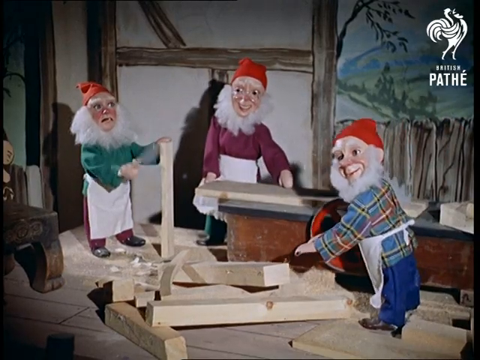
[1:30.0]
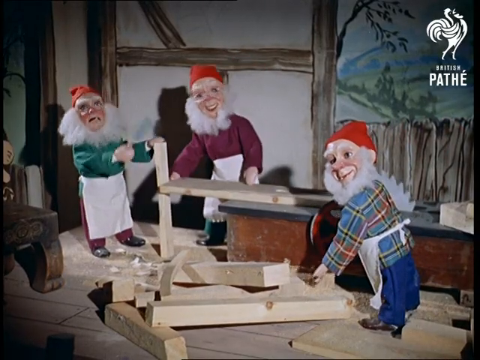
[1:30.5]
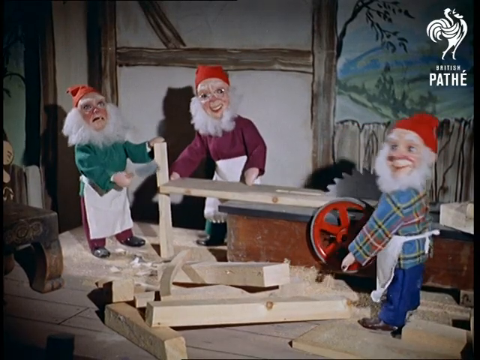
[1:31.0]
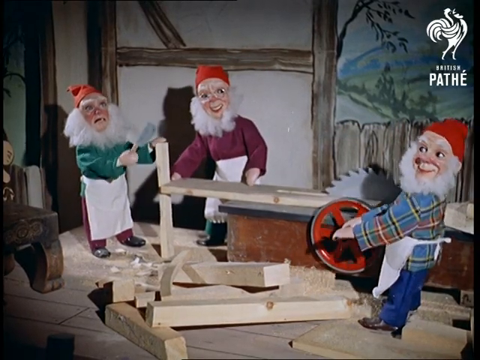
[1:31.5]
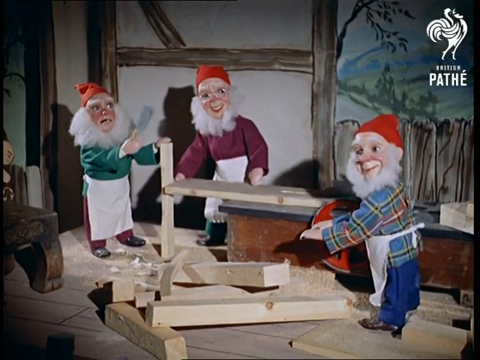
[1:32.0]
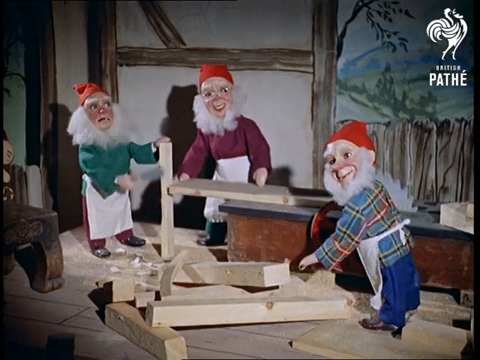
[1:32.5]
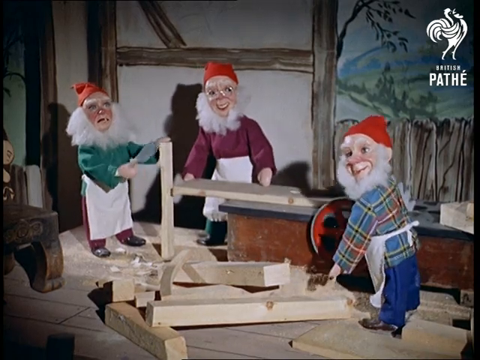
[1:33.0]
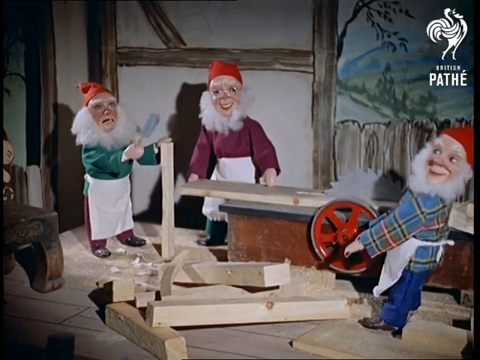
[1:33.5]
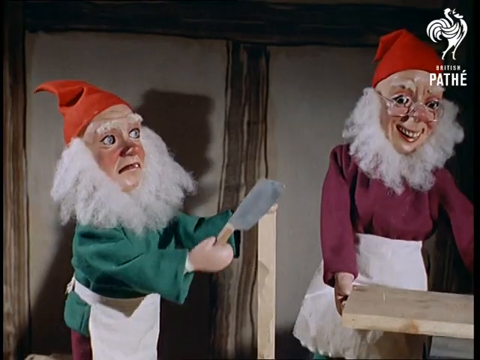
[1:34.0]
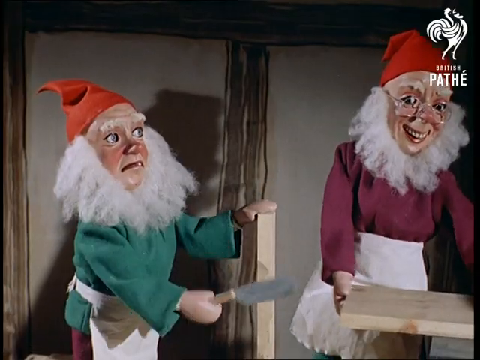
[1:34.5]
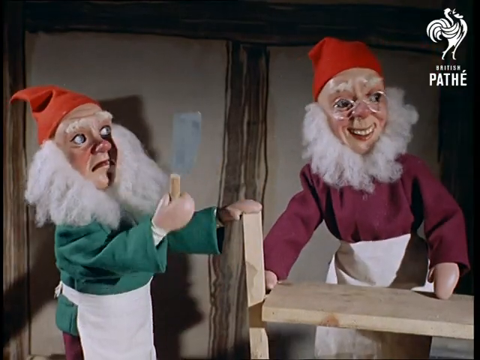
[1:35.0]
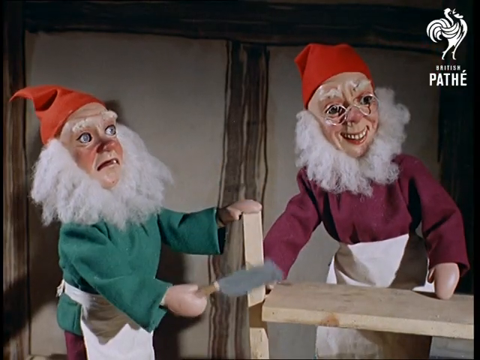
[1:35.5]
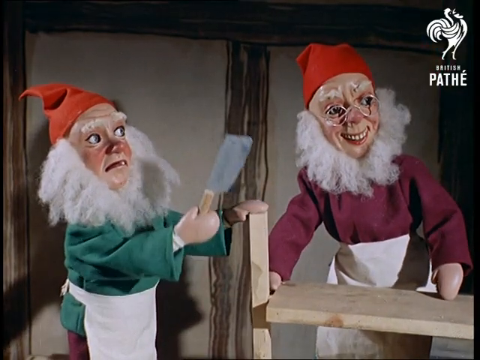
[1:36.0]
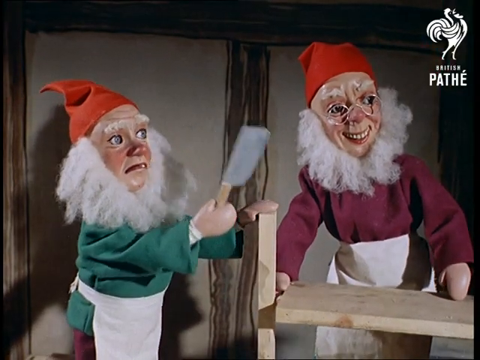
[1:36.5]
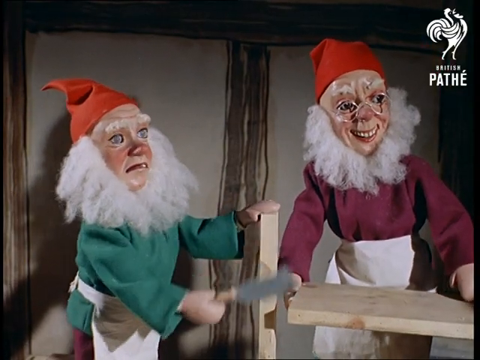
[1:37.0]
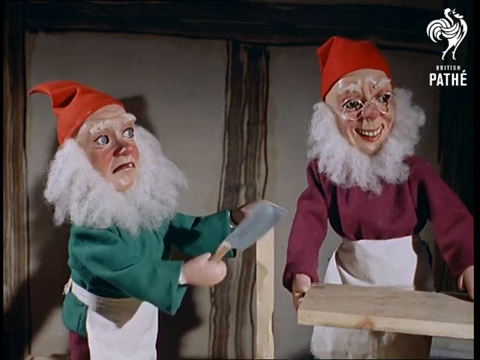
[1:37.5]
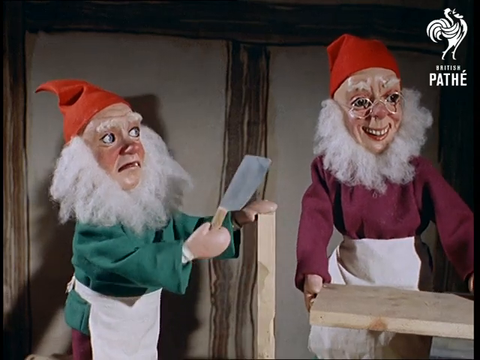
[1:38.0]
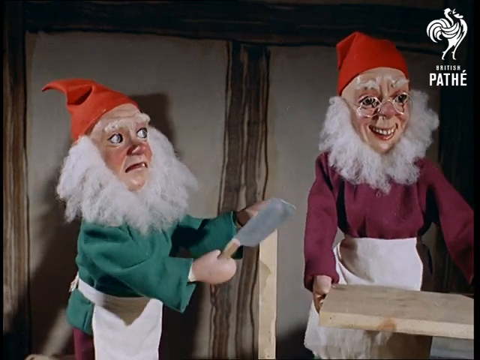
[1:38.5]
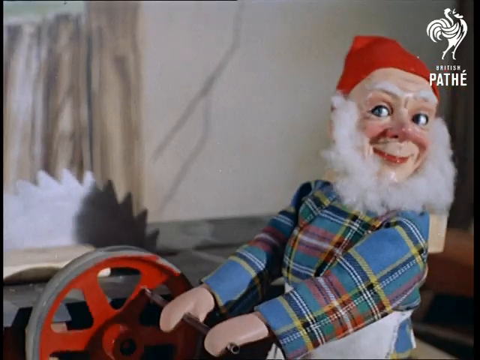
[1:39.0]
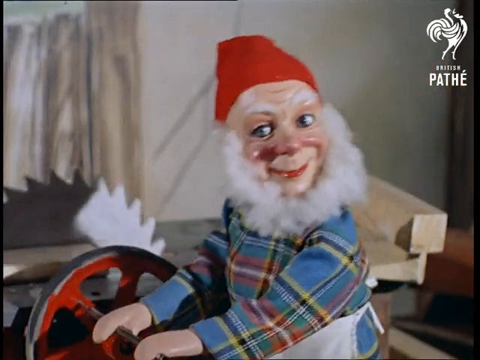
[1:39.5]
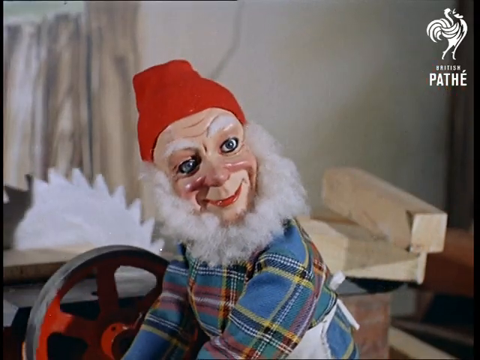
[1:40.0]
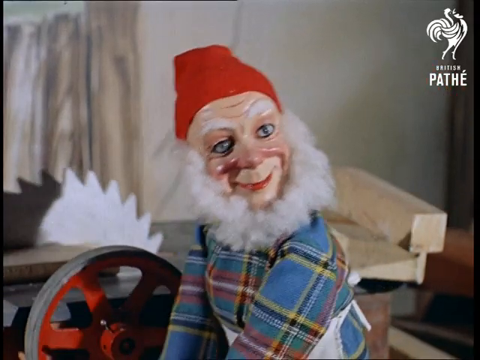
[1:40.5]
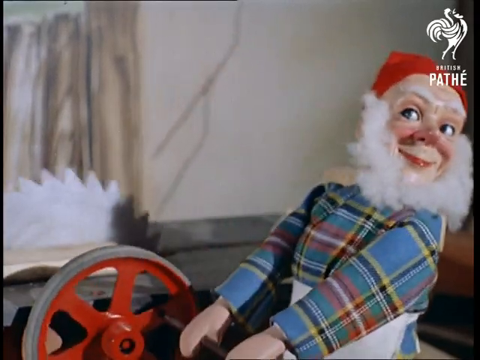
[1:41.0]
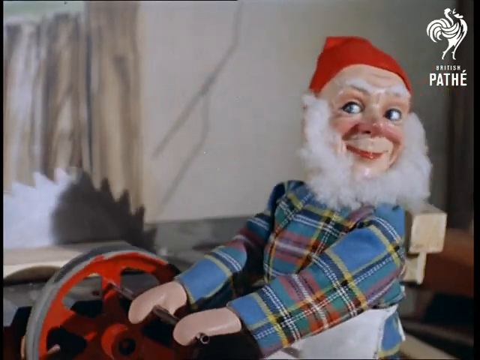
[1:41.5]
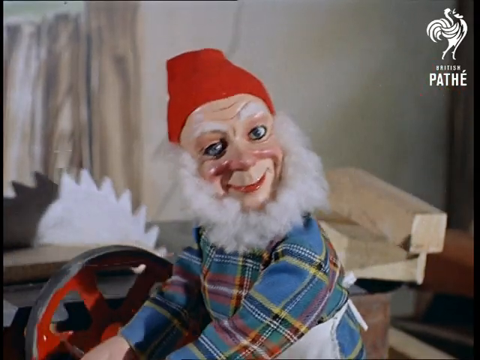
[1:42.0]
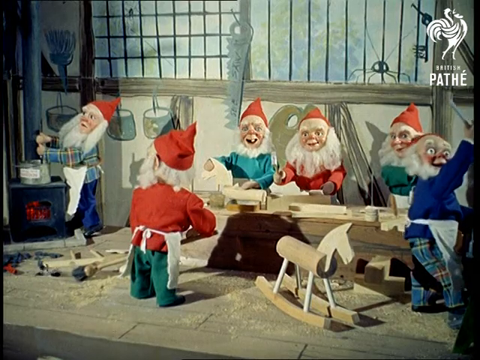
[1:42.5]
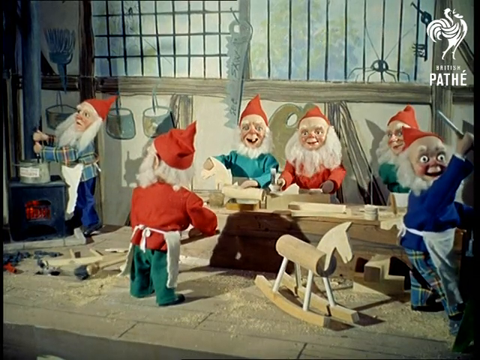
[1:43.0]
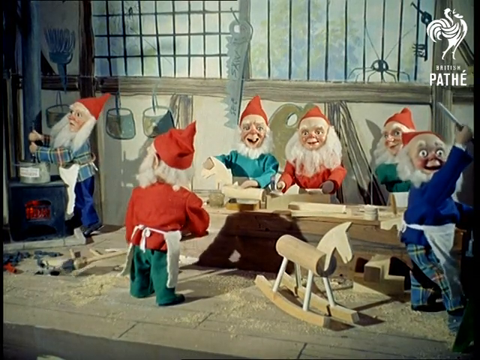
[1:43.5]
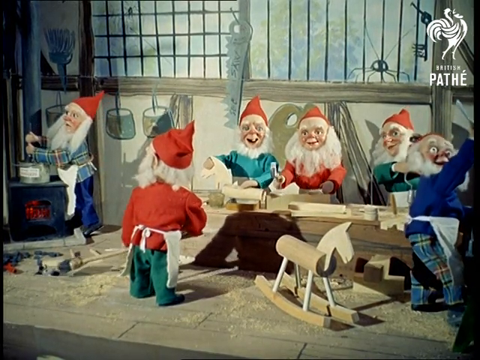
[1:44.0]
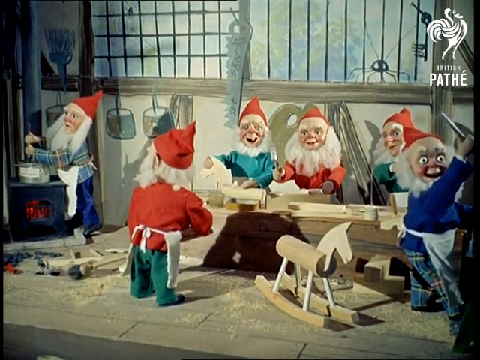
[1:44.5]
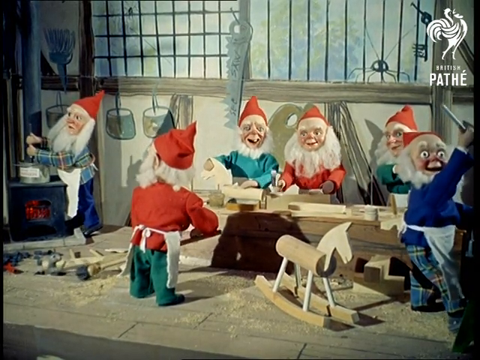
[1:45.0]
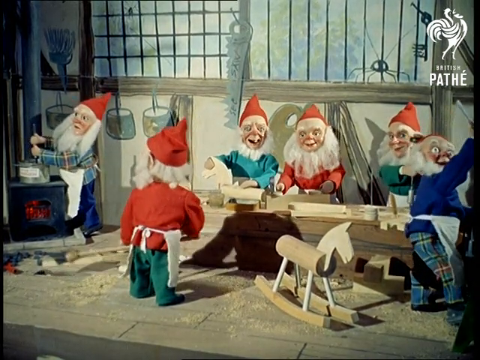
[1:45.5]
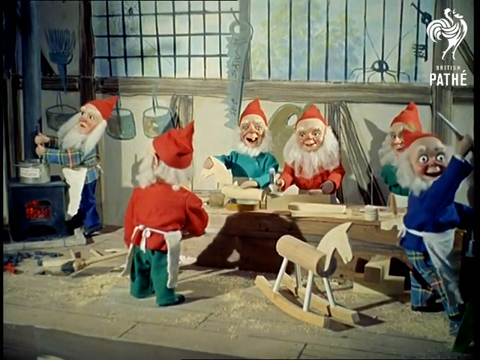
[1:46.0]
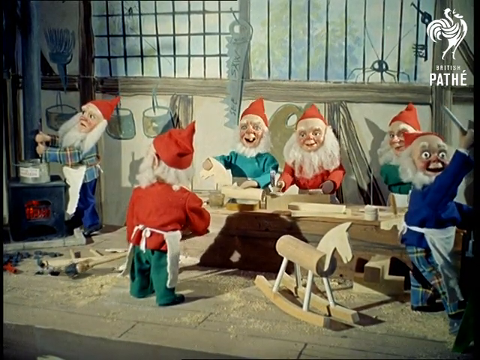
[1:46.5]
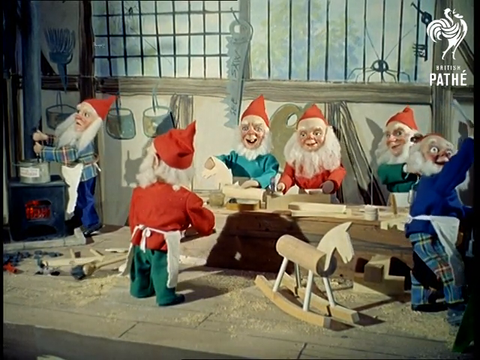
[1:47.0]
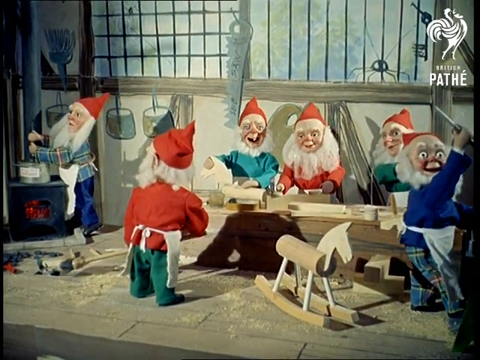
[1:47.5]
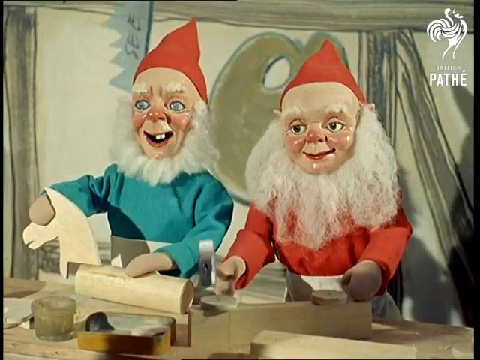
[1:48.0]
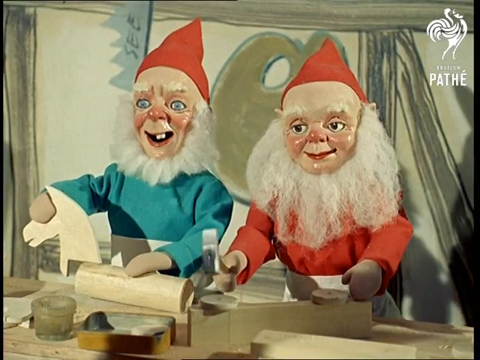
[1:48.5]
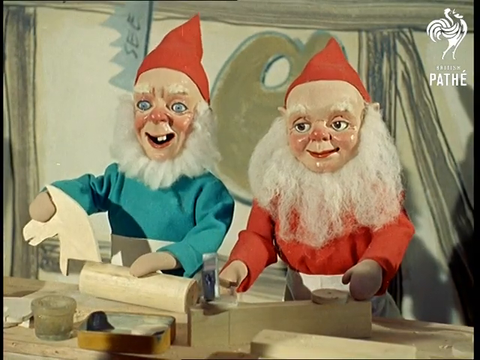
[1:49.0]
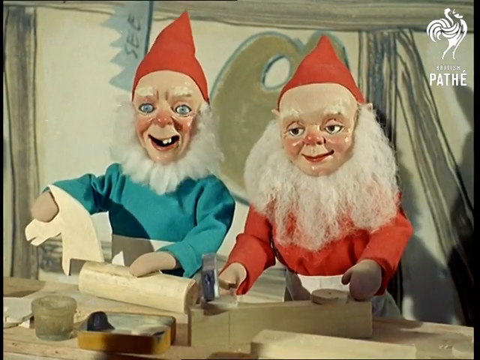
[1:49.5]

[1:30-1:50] Another scene shows similar puppets with red heads. Instead of playing music, they are kind of working in a workshop. One turns a red wheel that pushes a wooden block forward, another seems to be adjusting that wooden block, and one has another wooden block with which it chops the block. The video cuts to a different scene where the puppets seem to be working in the workshop. One mops the floor, and a small puppet mouse is visible. They are working on what may be wooden toys. One cooks something on a fire stove, and the others gather on the table. Everyone seems to be doing something with wood in the wood workshop. The puppets' eyes move because they are connected to the mechanism. The workshop has windows drawn on the wall, and some bugs are also drawn on the wall. It is a warm, quiet place.